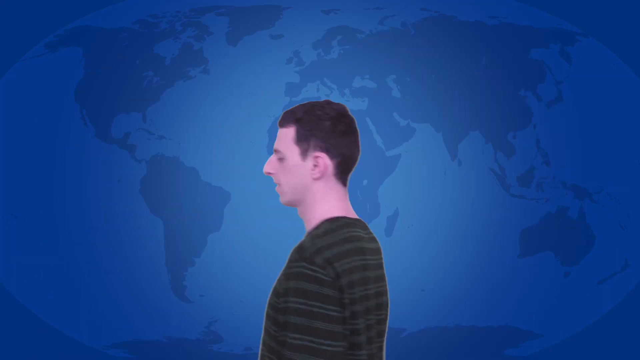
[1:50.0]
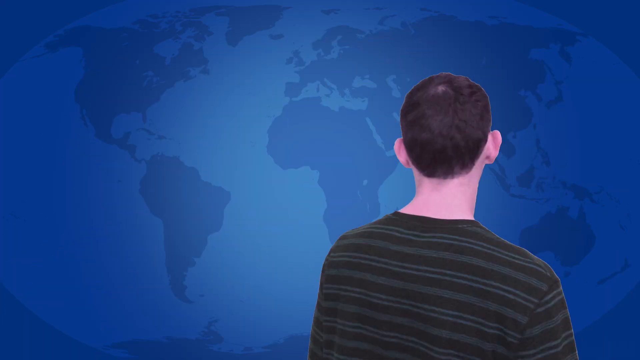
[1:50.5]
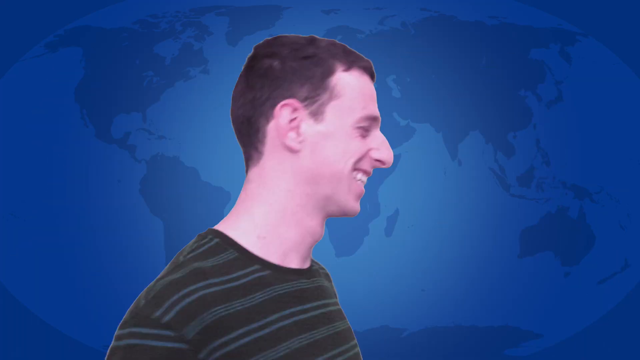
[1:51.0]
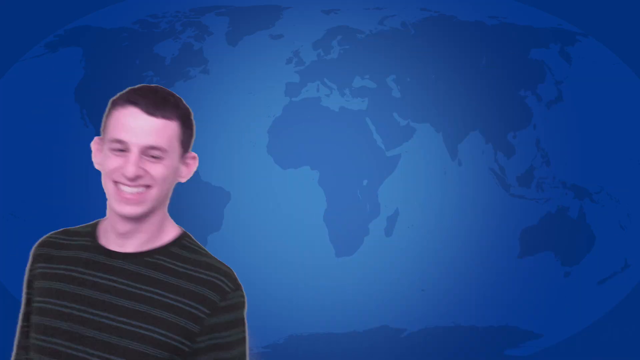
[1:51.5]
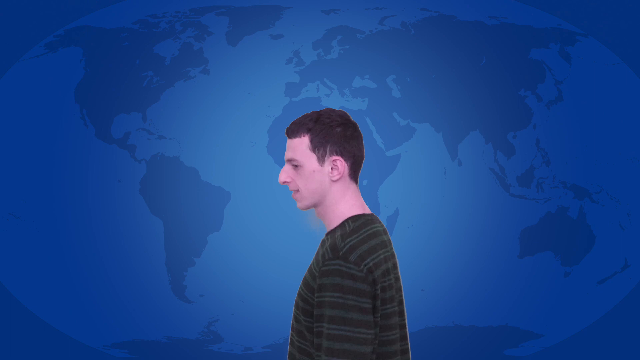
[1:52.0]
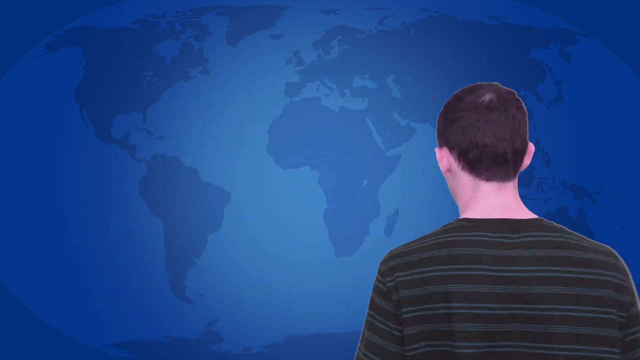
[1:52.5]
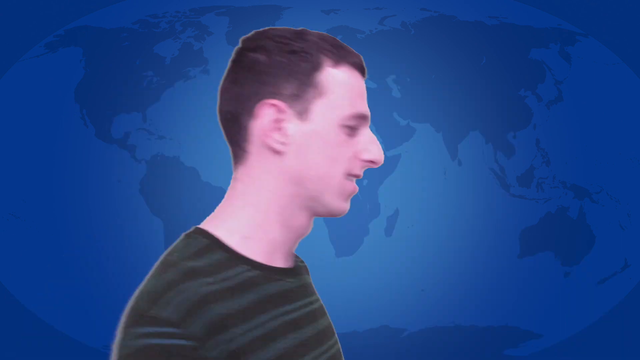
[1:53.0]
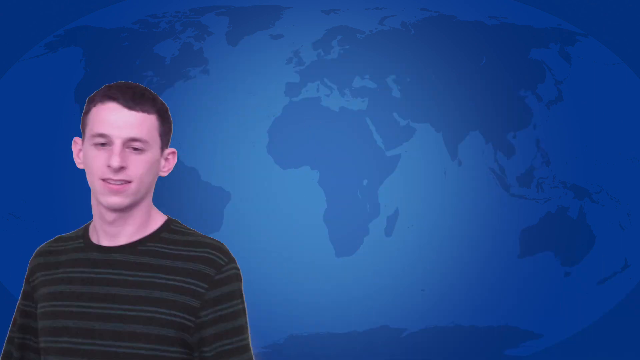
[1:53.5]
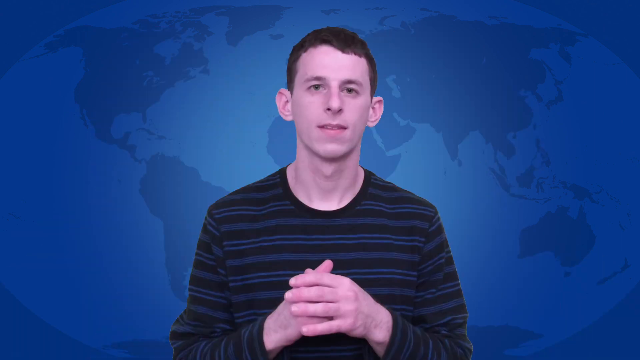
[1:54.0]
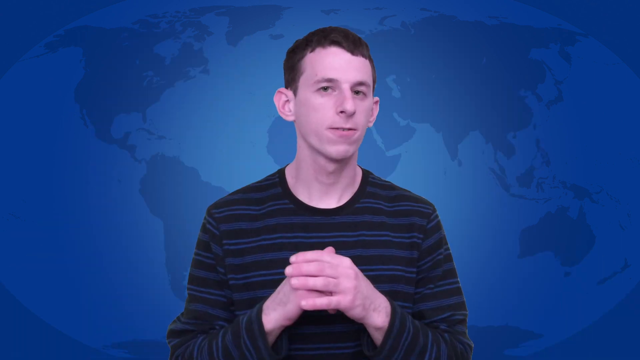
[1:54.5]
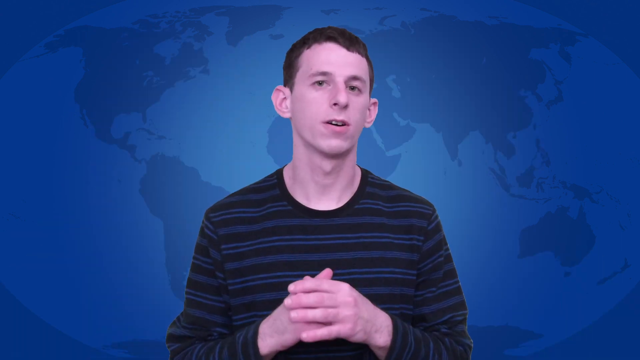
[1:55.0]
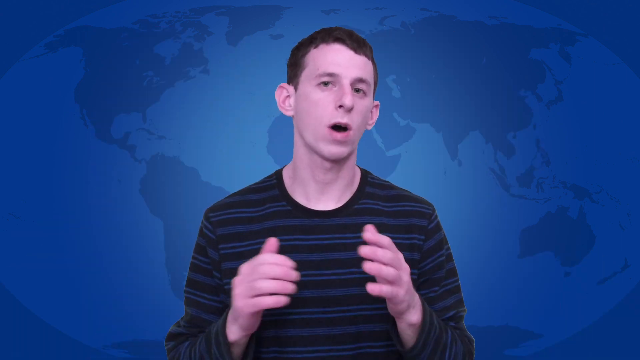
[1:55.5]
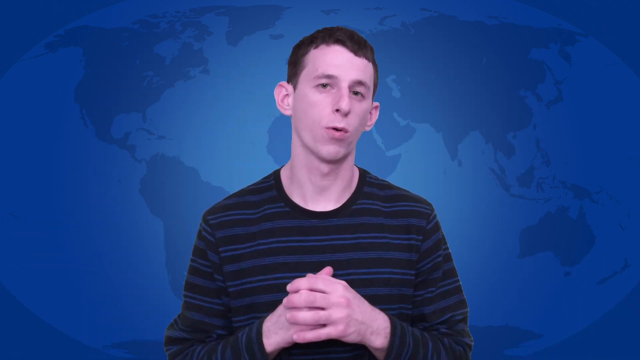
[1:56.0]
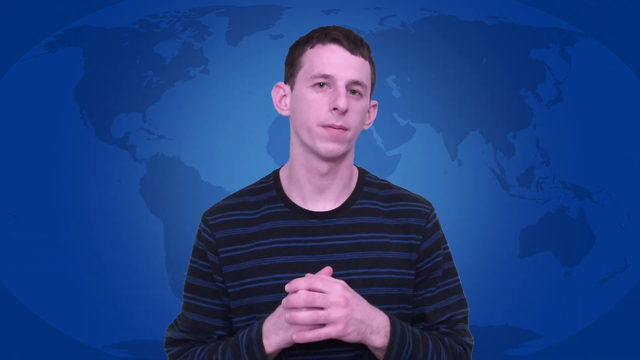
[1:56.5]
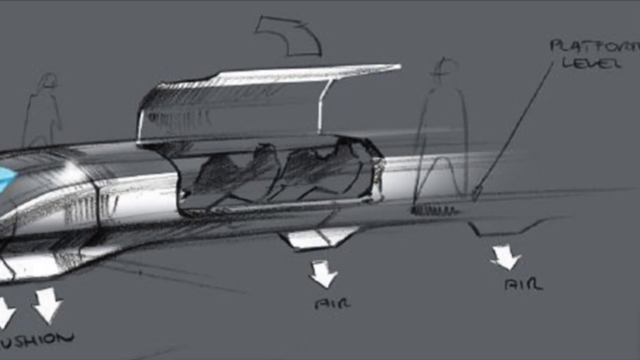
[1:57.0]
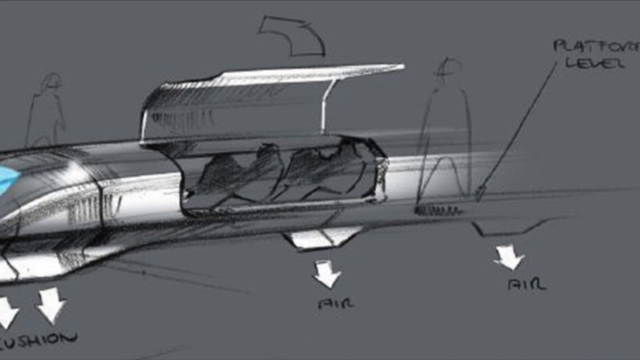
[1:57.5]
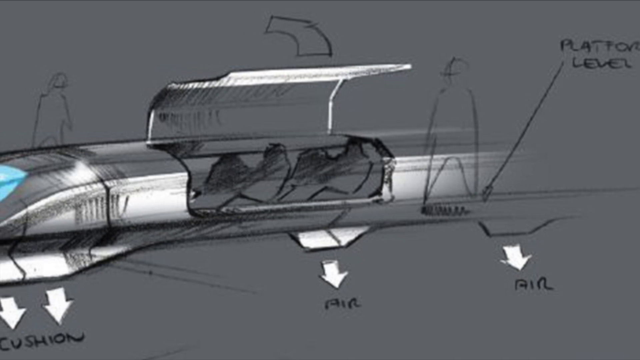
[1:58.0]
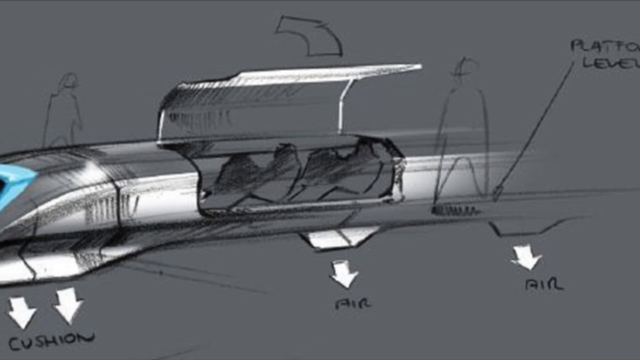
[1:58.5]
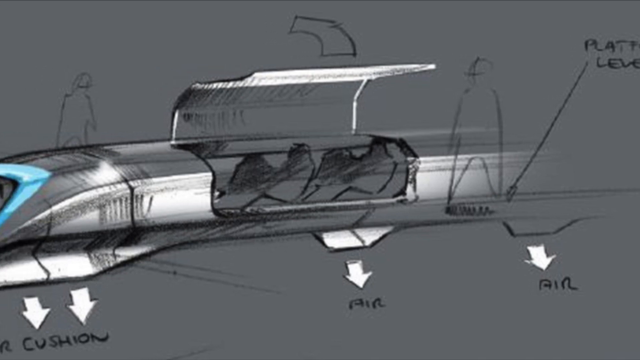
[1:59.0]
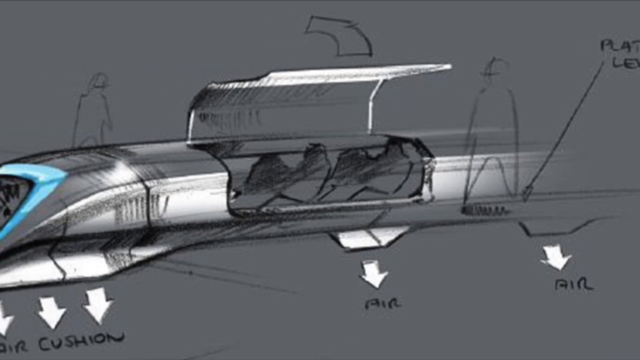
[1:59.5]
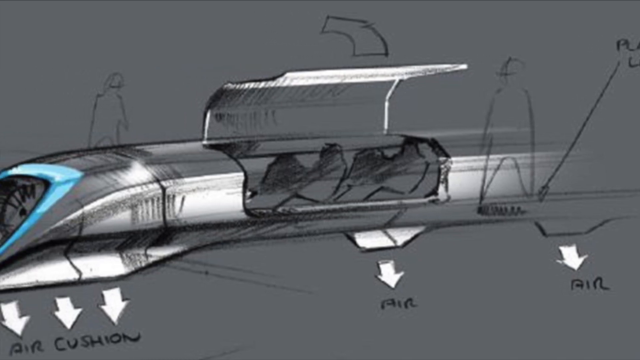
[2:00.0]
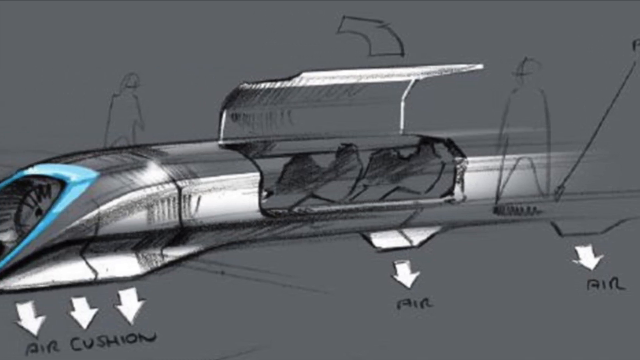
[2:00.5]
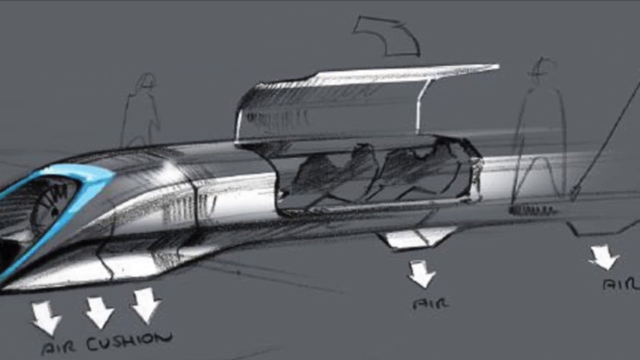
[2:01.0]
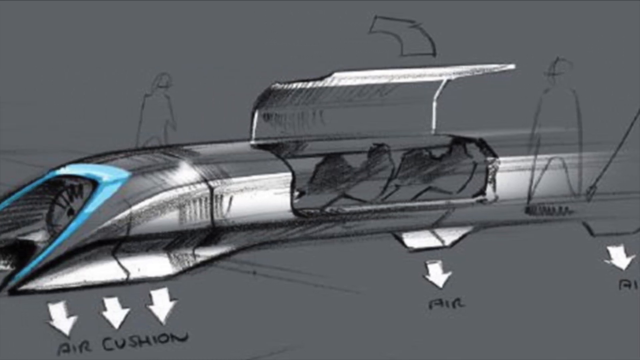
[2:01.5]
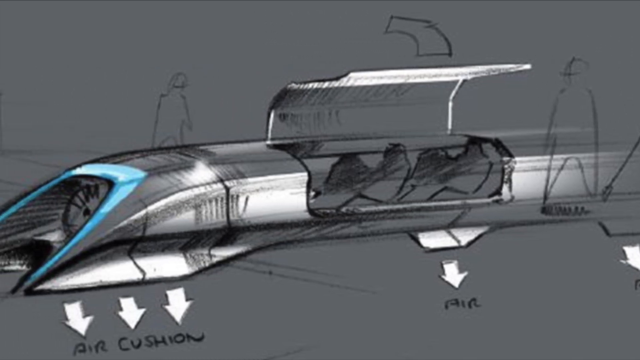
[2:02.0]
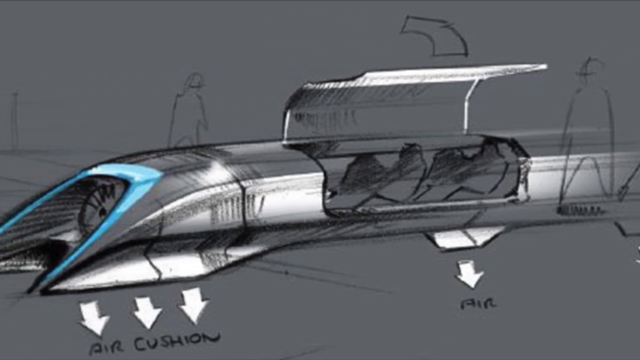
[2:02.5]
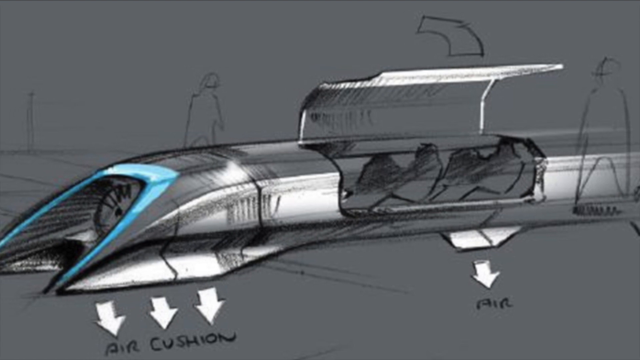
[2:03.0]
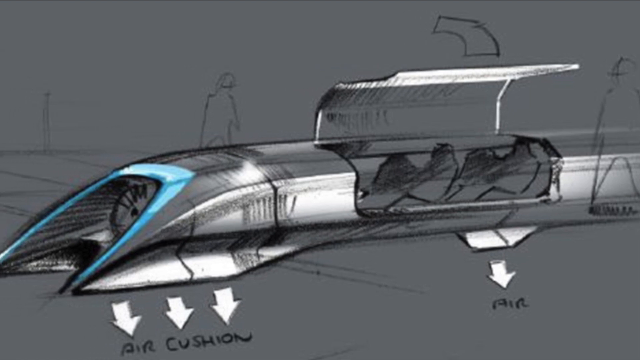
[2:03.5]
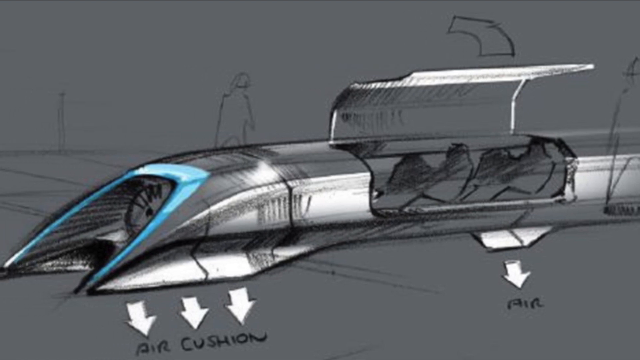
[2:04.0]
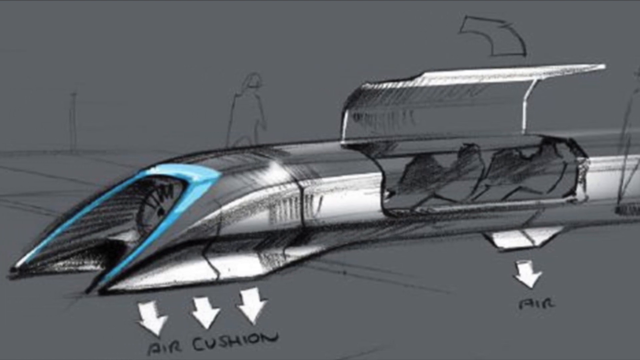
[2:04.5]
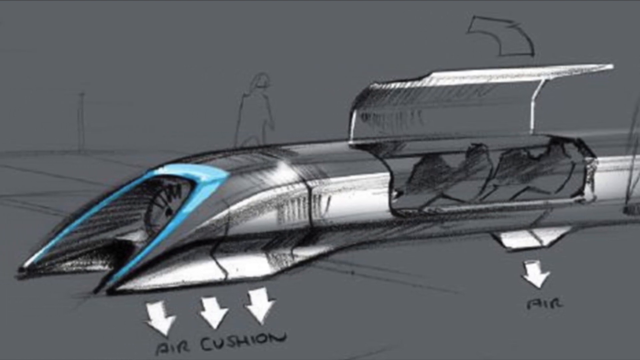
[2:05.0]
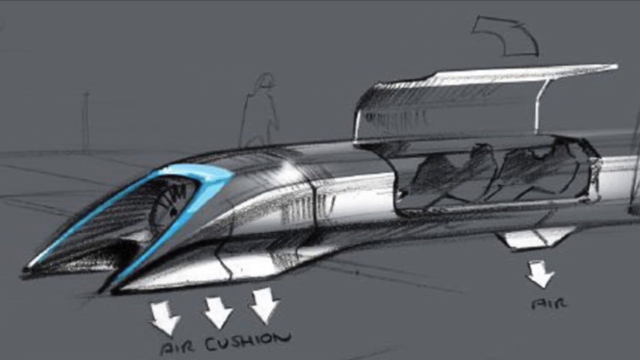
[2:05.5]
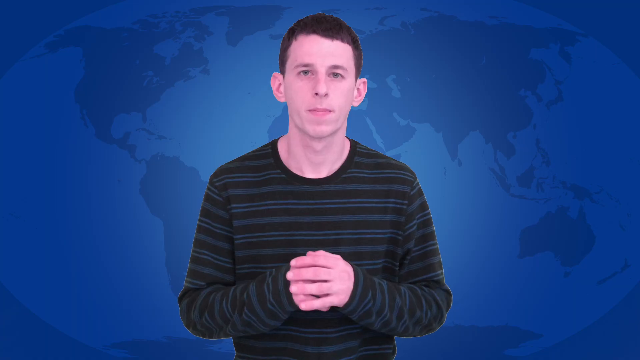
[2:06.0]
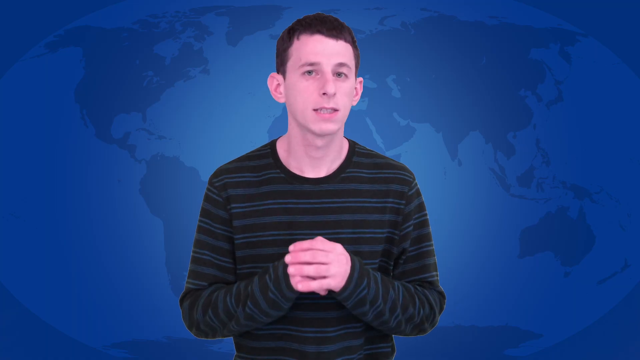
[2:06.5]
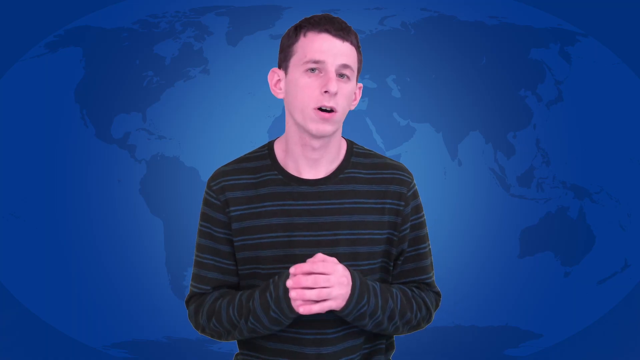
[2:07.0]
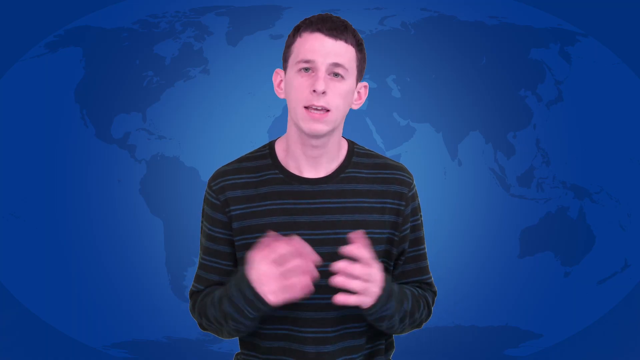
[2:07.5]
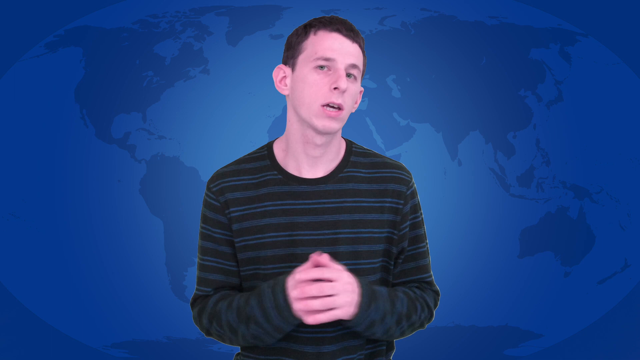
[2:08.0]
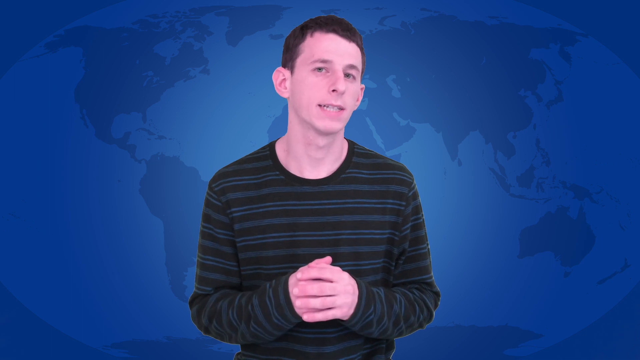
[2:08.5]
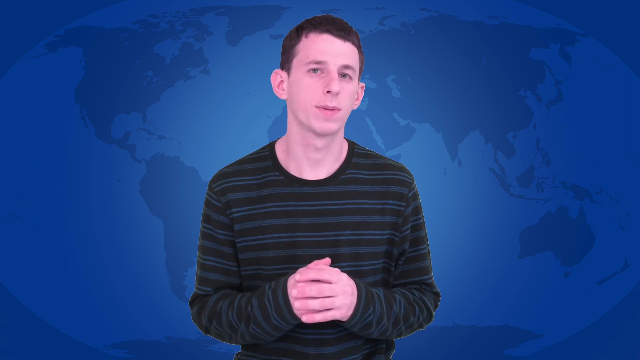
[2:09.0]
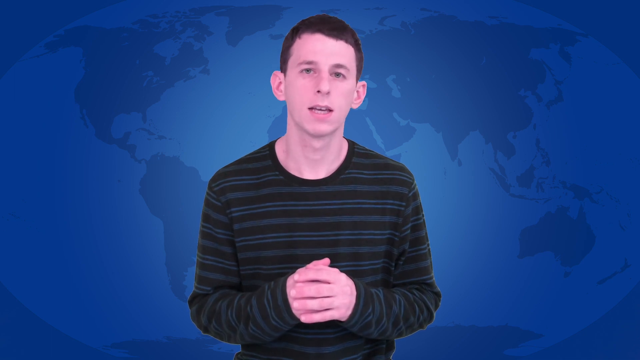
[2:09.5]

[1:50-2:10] The young man in the striped shirt goes around and around really fast, apparently because the video has been sped up. Then a drawing of the driving container appears: the passengers sit kind of in the middle, there is a blue stripe on the front, and a label says "air cushion." The man continues talking. The container has an open hatch at the top, with the side going up. The image looks partly like a drawing and partly like a painting, maybe made with a computer.